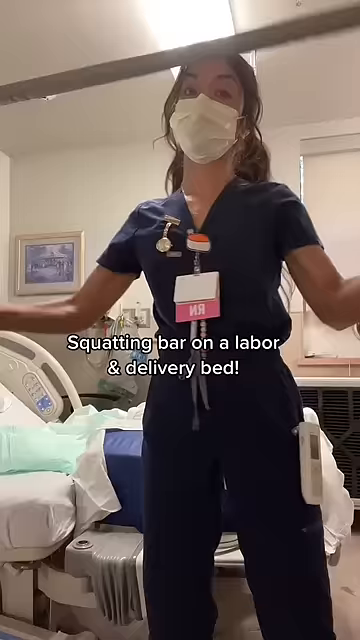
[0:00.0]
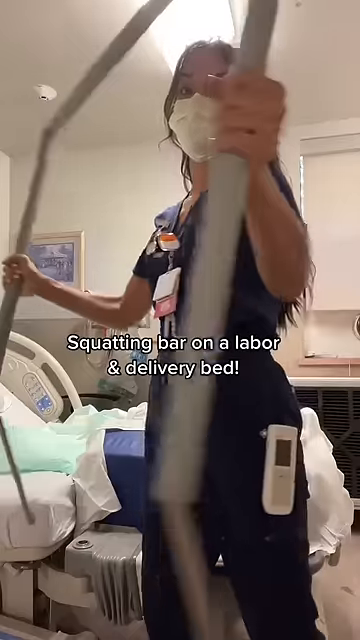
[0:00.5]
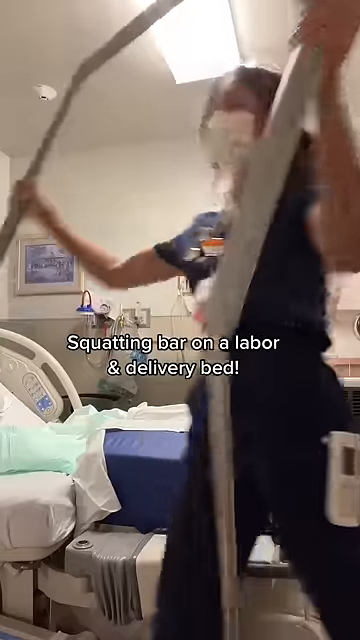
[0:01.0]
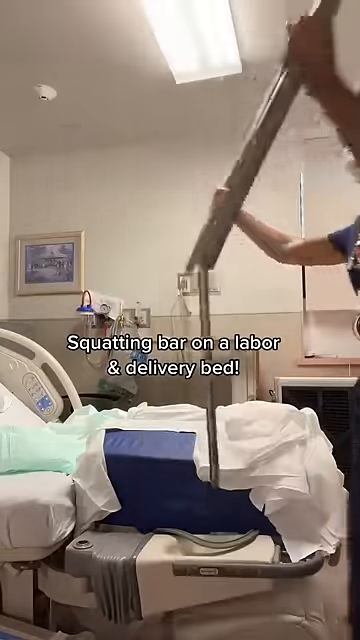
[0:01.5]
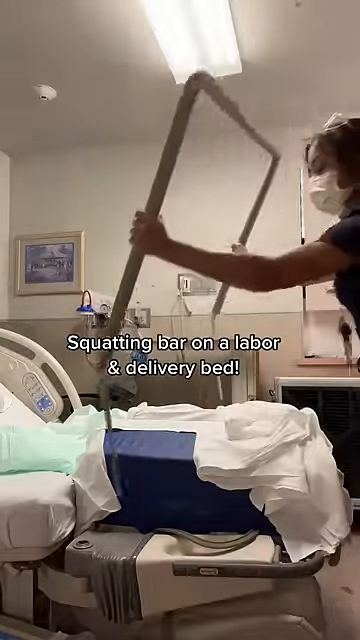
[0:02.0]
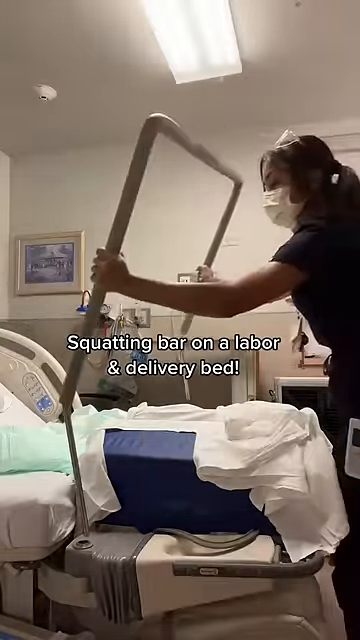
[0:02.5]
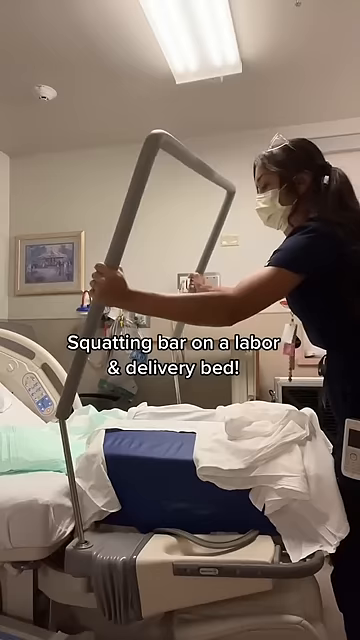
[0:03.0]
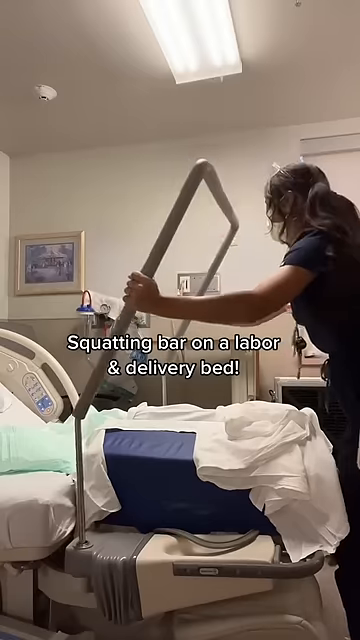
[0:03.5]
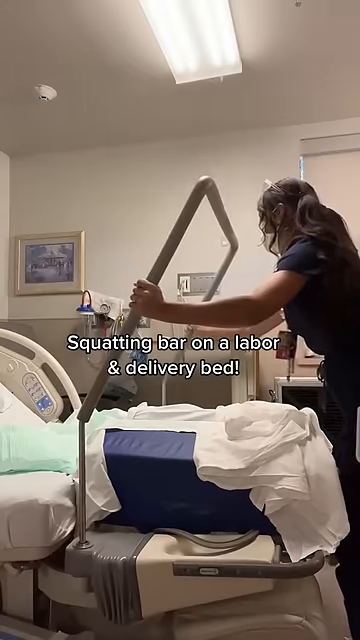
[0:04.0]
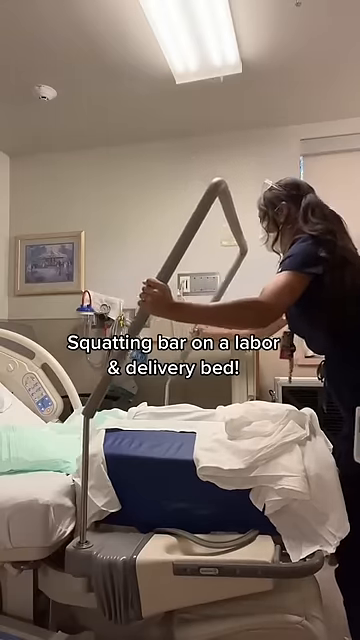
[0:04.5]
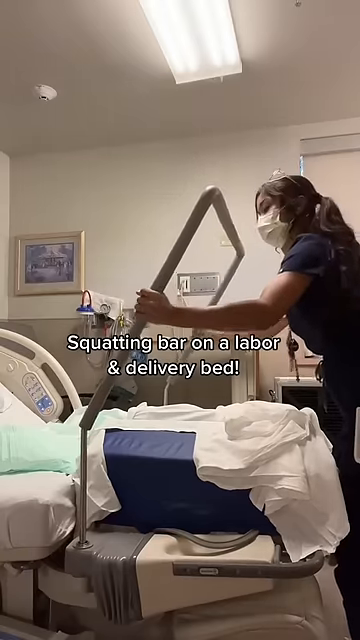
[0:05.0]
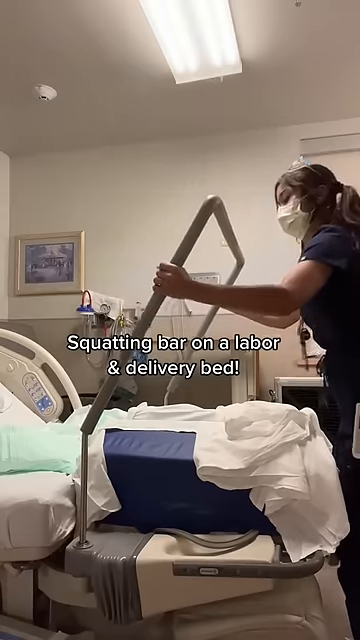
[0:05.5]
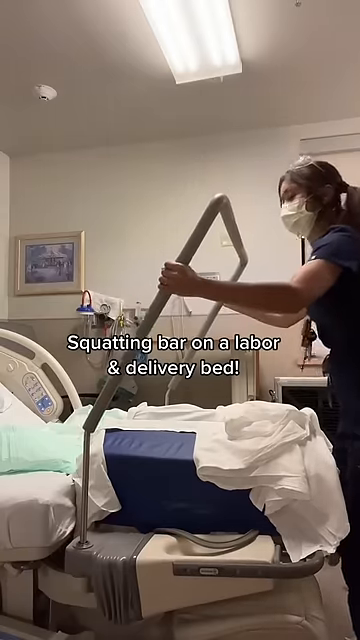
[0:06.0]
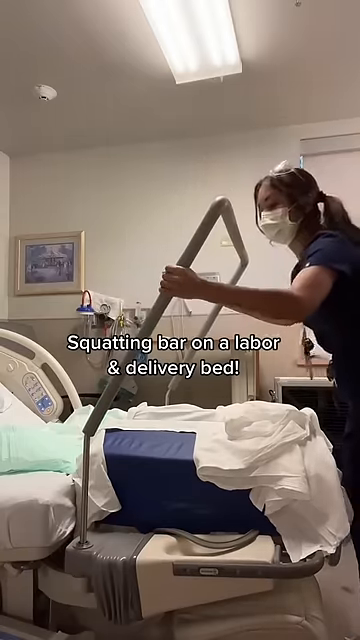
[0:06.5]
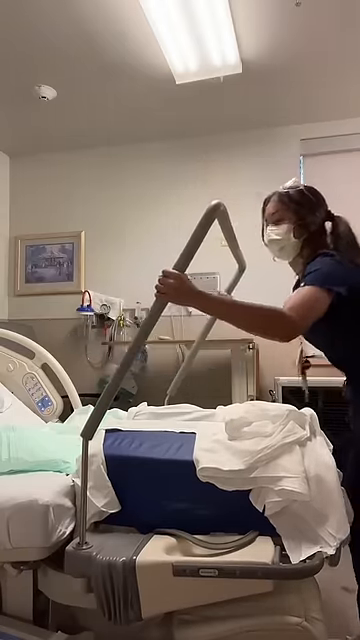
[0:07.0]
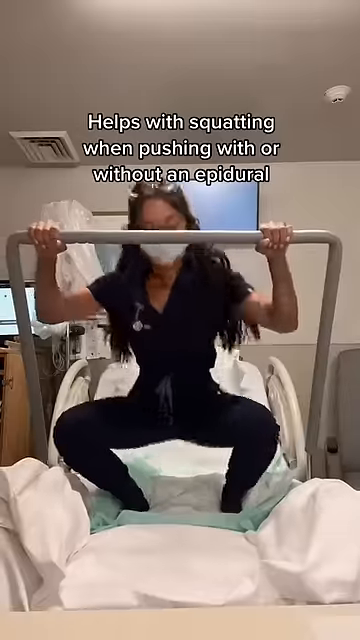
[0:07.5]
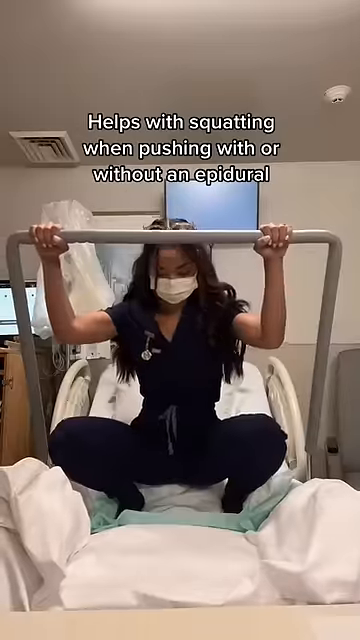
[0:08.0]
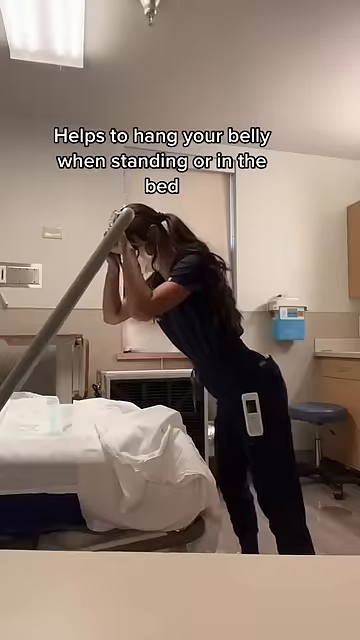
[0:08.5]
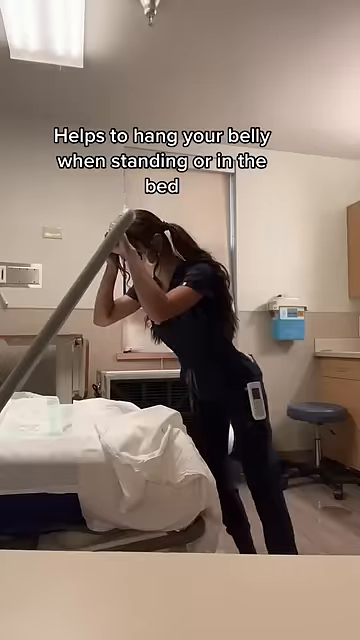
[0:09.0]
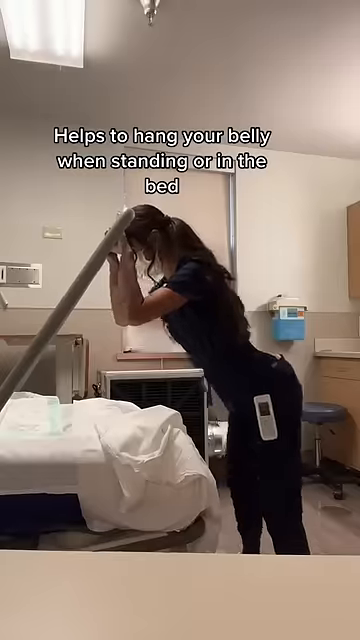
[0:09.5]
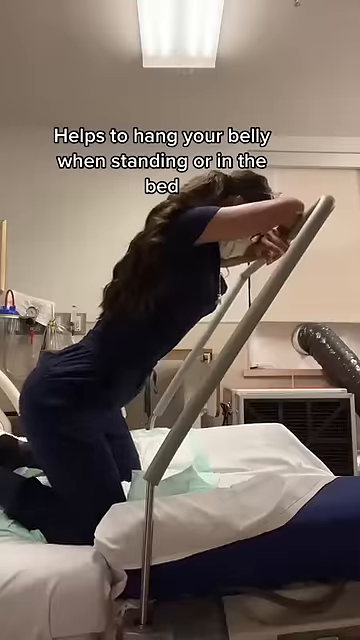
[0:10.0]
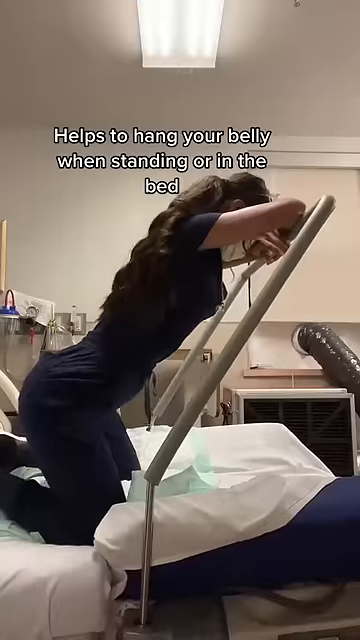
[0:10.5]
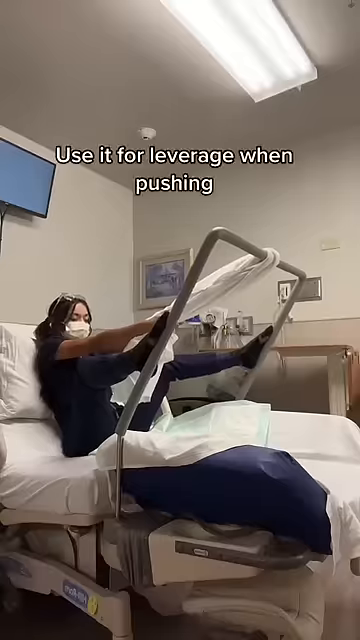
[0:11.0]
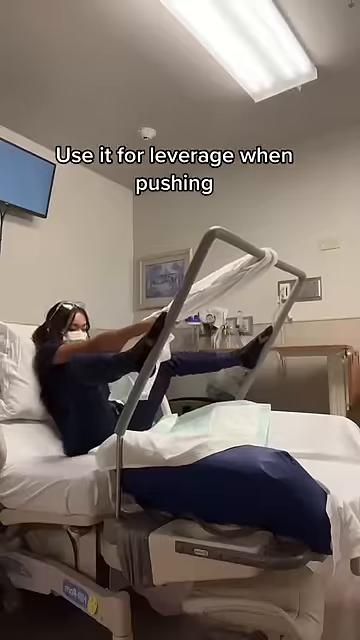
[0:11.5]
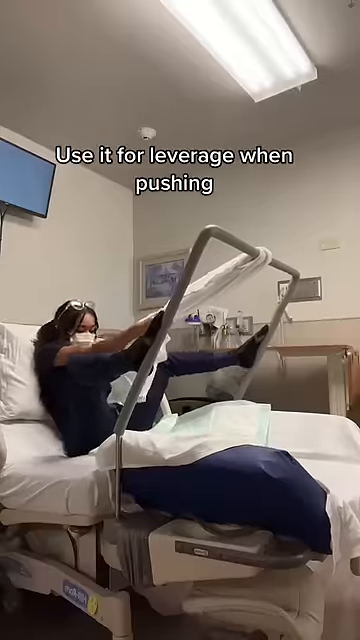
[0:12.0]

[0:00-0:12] A nurse is installing a bar on a bed. On-screen text reads "squatting bar for a labor and delivery bed." Further text says it "helps with squatting, hangs your belly, and you can use it for leverage," and that it helps women who are going through labor and about to go through delivery. The setting appears to be an OBGYN setting, with the bar meant for mothers about to go into labor and deliver their babies.